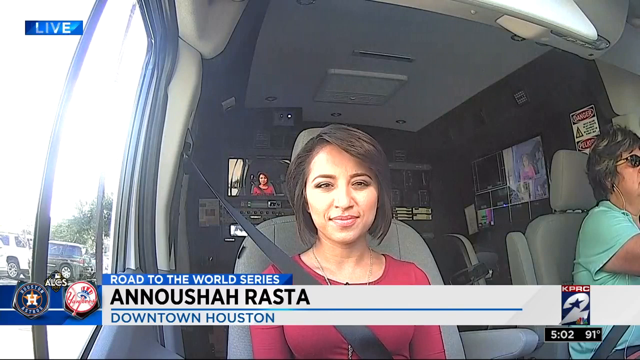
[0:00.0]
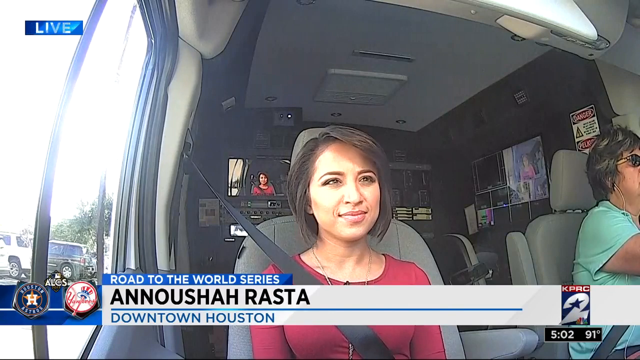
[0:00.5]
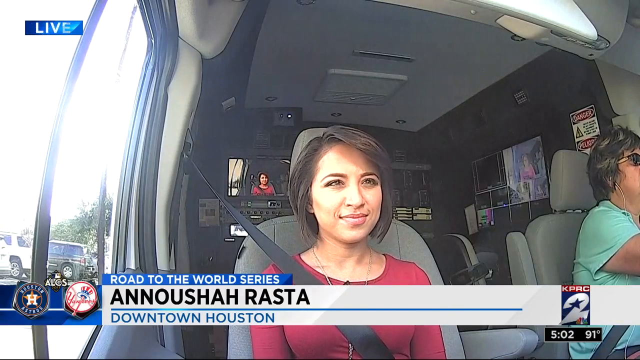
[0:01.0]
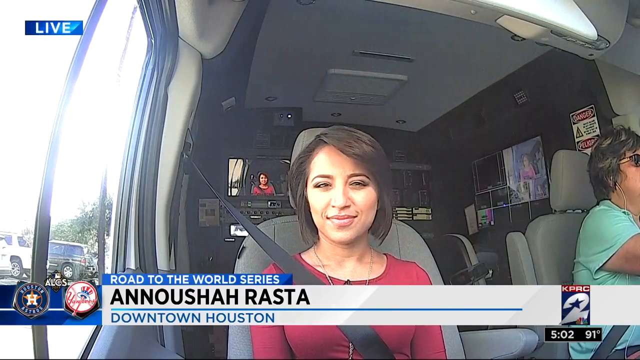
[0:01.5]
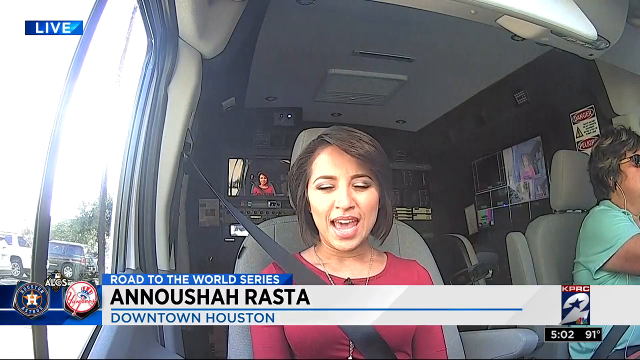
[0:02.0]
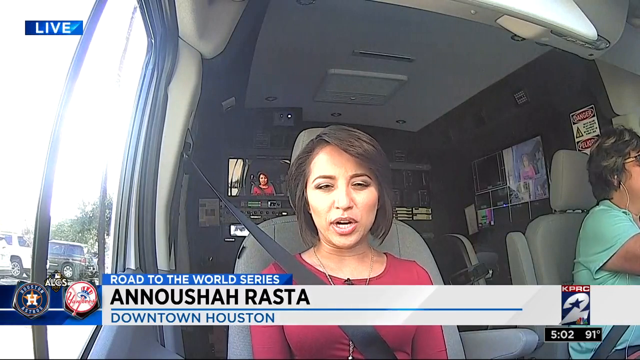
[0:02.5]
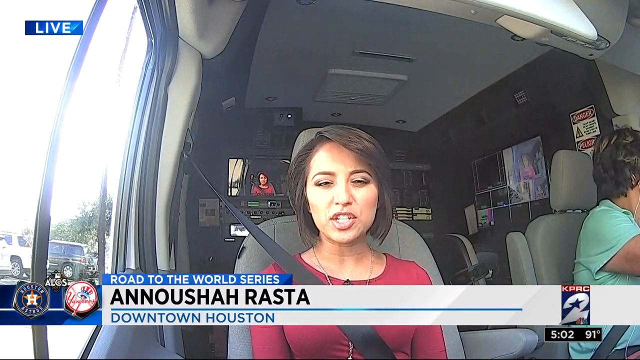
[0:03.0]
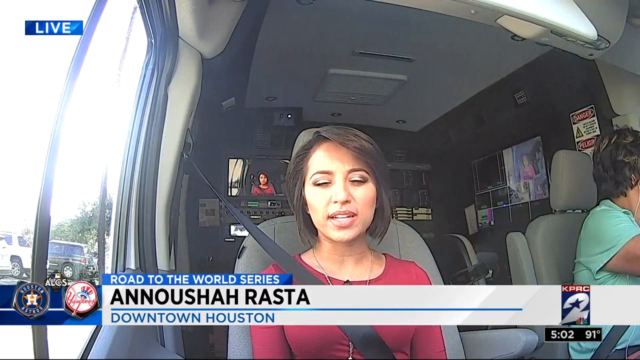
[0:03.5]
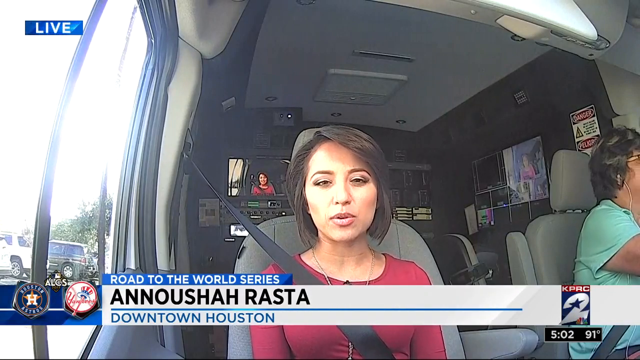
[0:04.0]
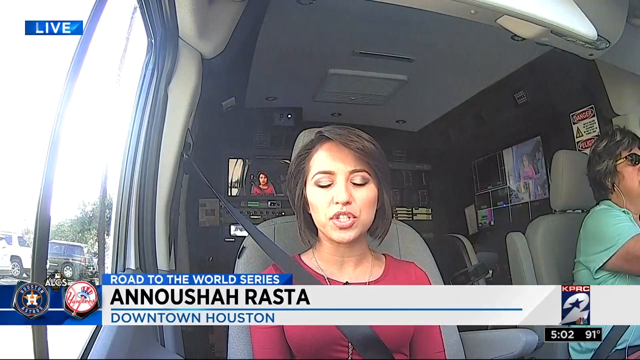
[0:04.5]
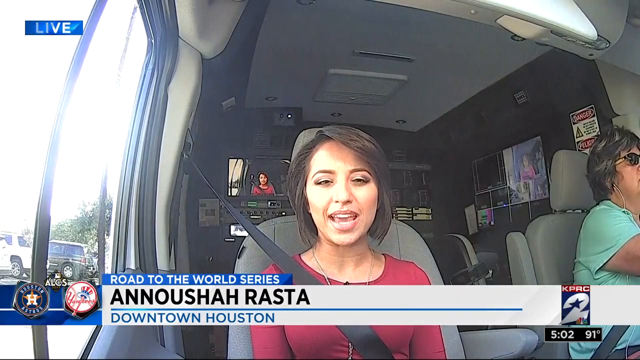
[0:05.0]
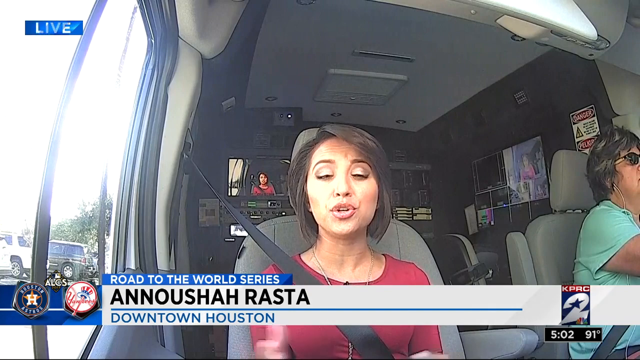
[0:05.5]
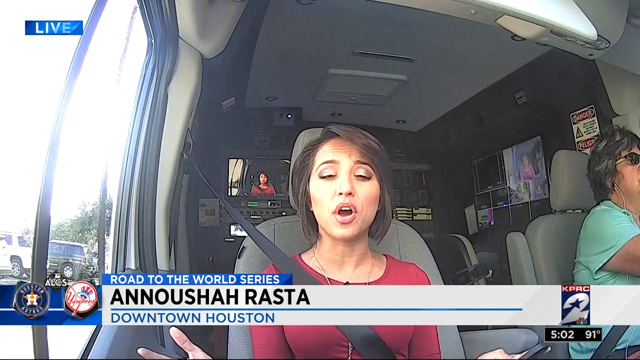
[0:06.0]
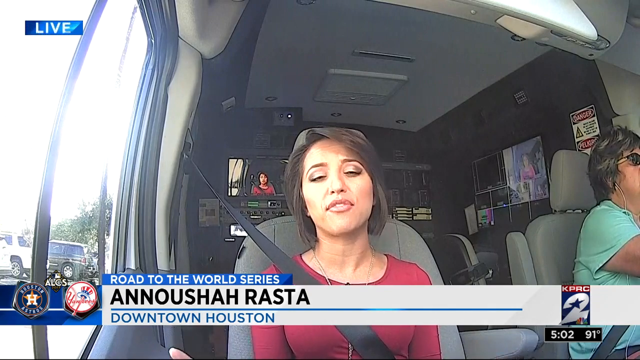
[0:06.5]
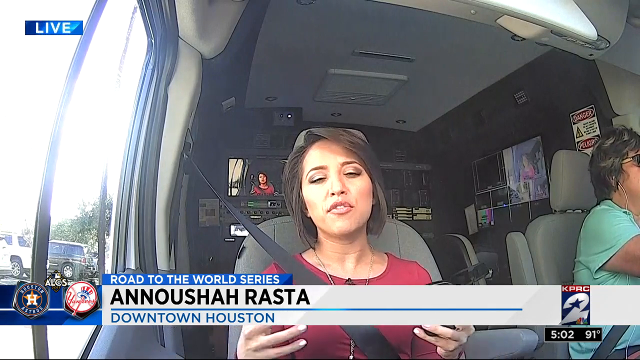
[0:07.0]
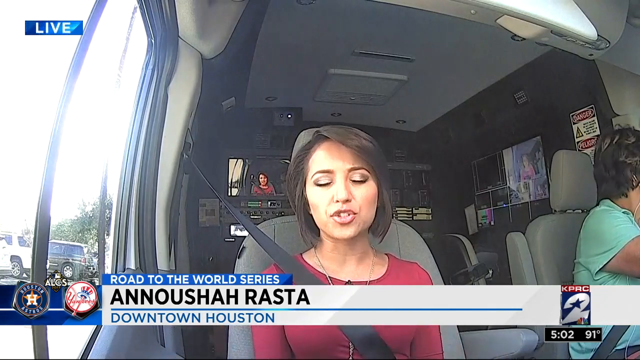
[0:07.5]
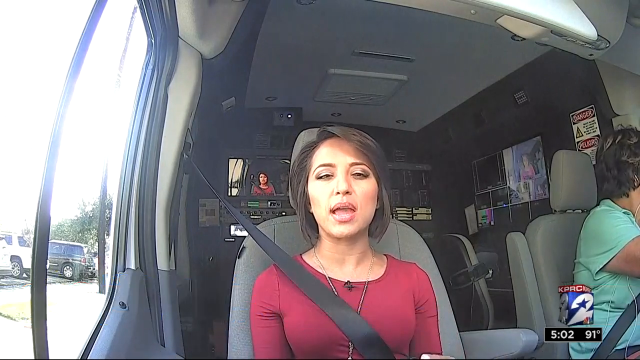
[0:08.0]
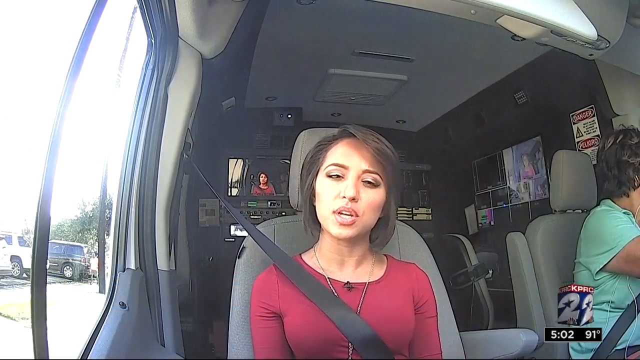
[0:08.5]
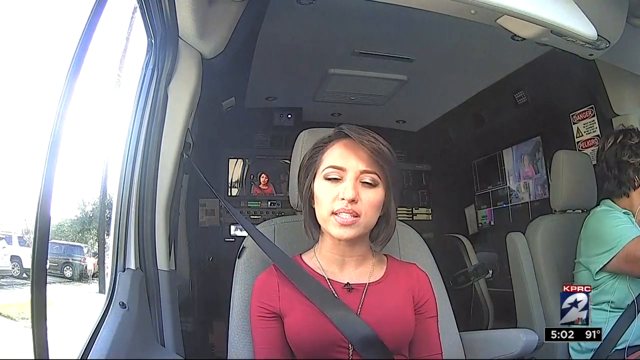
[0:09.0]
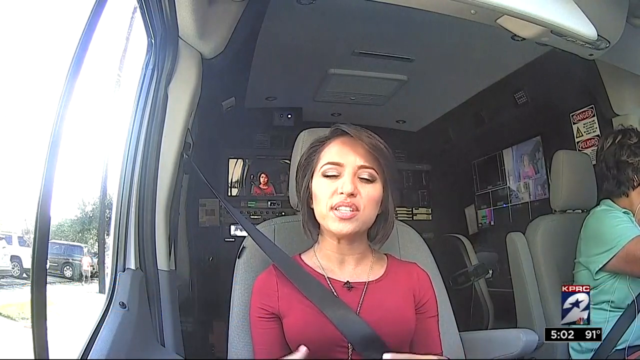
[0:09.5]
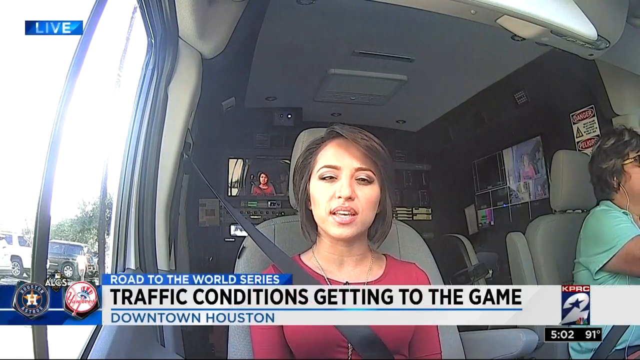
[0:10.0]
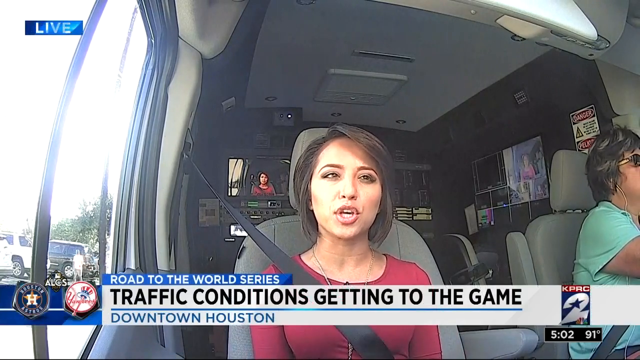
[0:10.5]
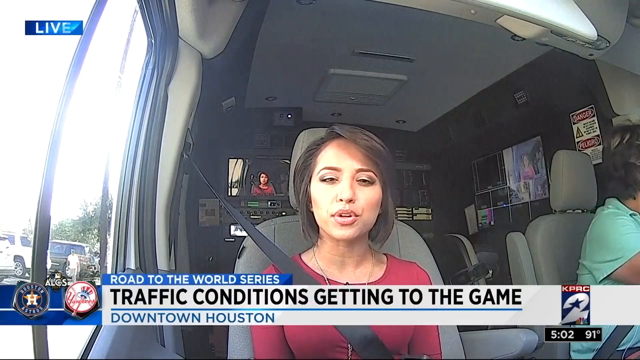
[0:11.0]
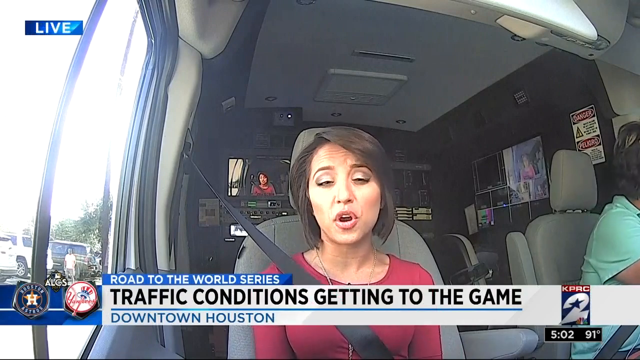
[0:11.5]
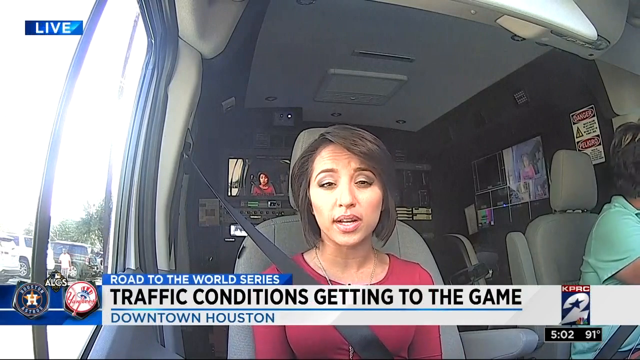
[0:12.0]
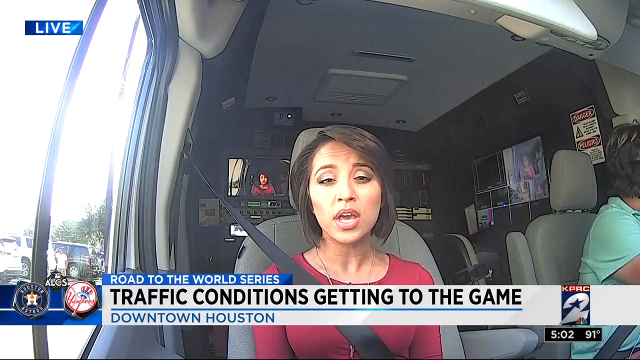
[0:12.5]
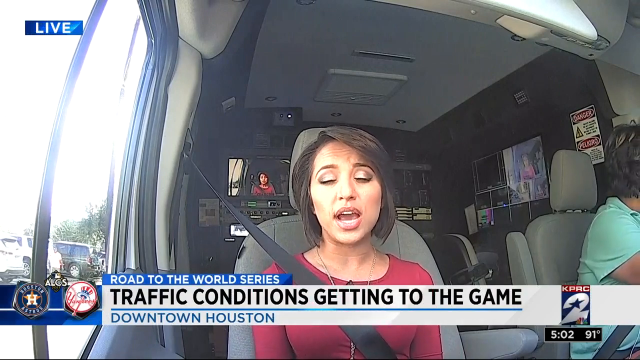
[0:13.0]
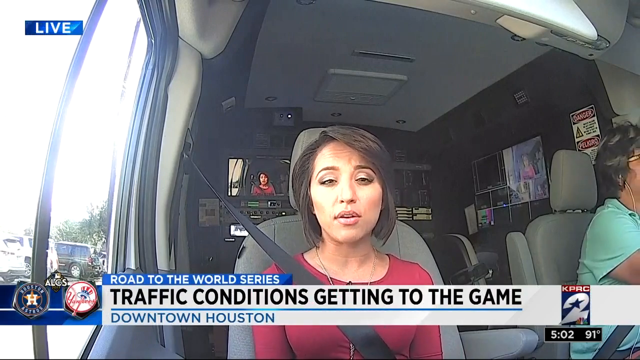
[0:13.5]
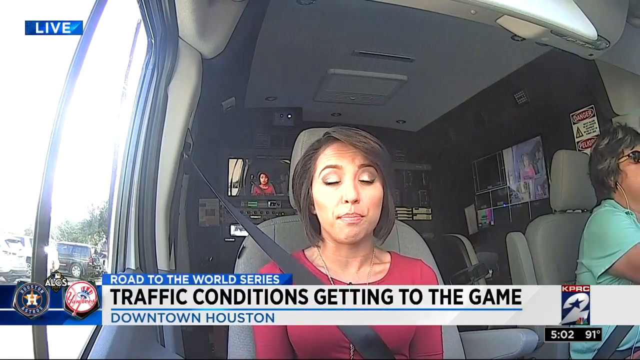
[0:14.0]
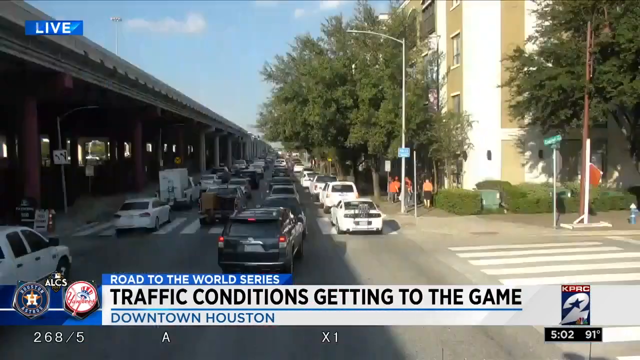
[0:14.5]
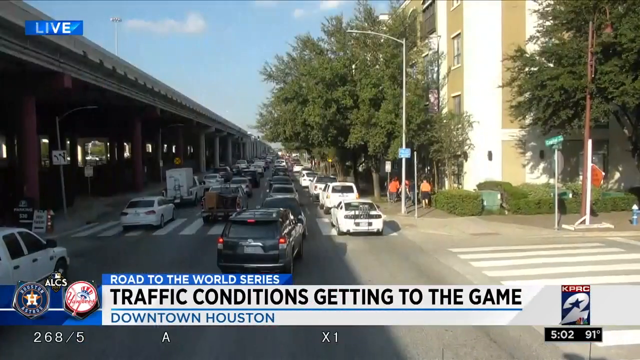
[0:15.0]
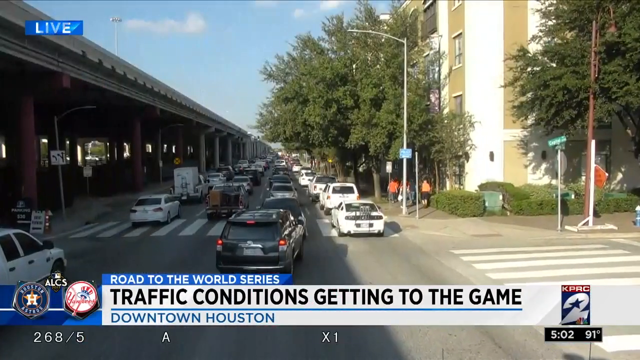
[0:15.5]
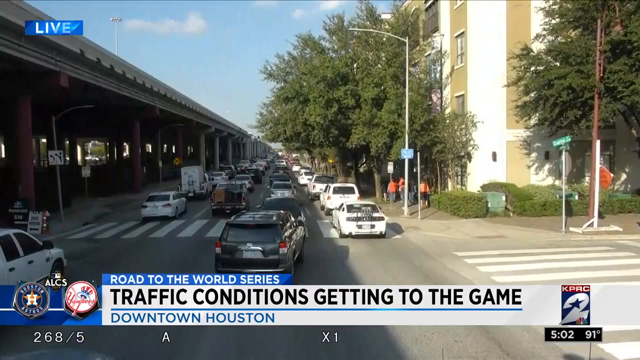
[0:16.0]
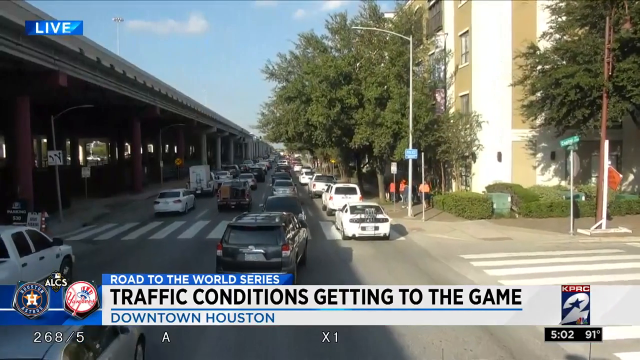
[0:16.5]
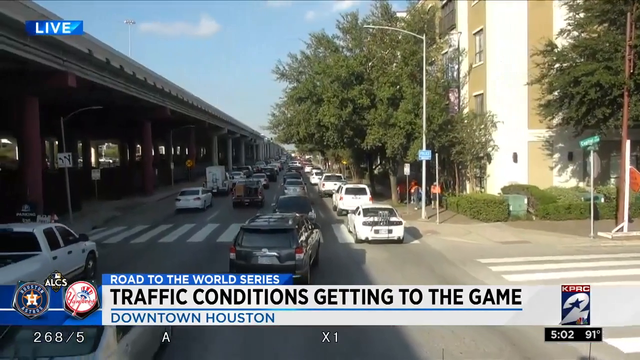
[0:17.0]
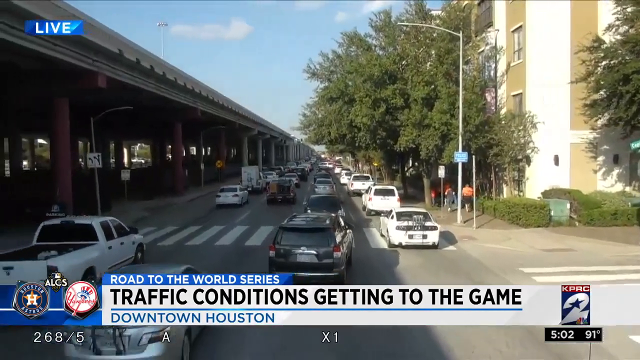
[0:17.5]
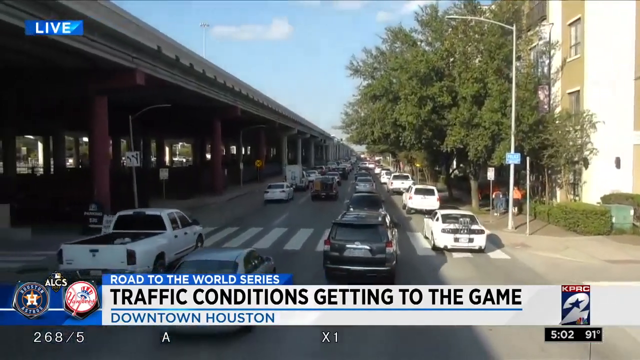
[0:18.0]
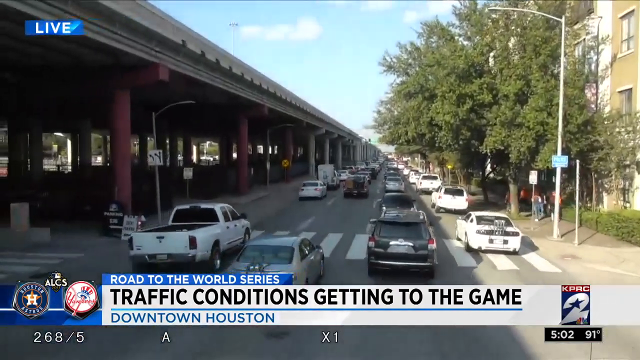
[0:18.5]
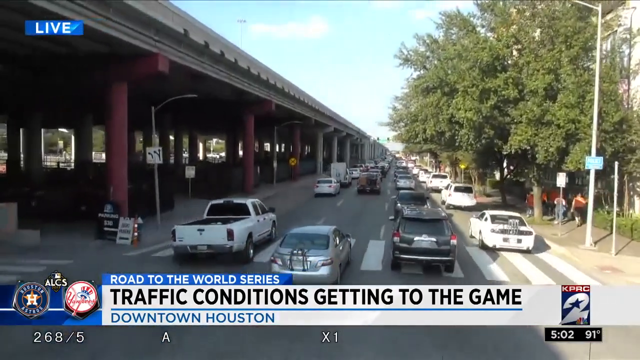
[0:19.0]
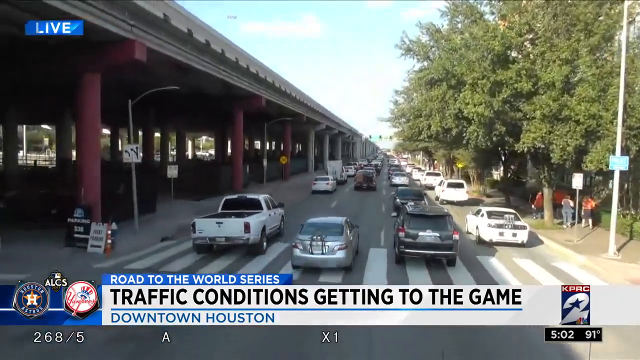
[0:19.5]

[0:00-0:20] A woman, apparently a reporter, sits in a news van. She wears a red top, looks to be in her mid-twenties, and has short bobbed hair parted on the left and swept off to the right. To her right another person sits in the driver's seat, and a television screen on the right behind them shows that they are in a news van. Behind the reporter is a small screen showing her face. The ticker at the bottom reads "Road to the World", and underneath it "Anusha Rasta, Downtown Houston". She smiles and then starts speaking to the camera, addressing the audience. She wears a seatbelt, and they are parked in a car park. A ticker comes up at the bottom reading "Traffic conditions get into the game, downtown Houston". The person on the right looks to their left, and then the view pans to a live shot of a road with queues of traffic in four lanes, with many cars sitting still on a crosswalk. People walk on the sidewalk under trees, and there is a white building and a green direction sign. The cars slowly start to move, and the camera pans to watch the traffic moving.